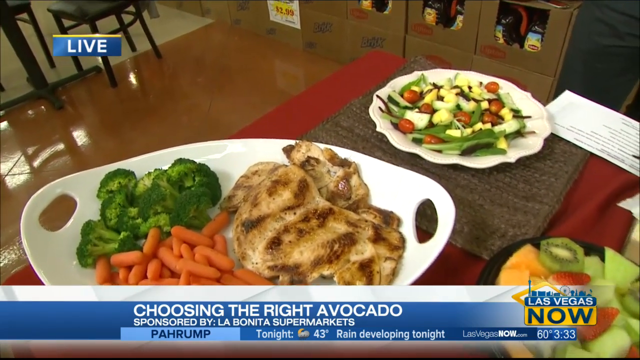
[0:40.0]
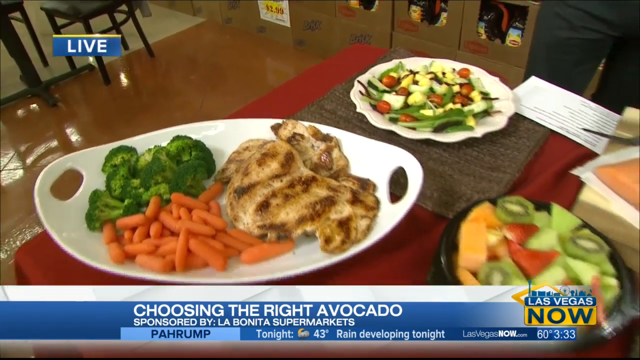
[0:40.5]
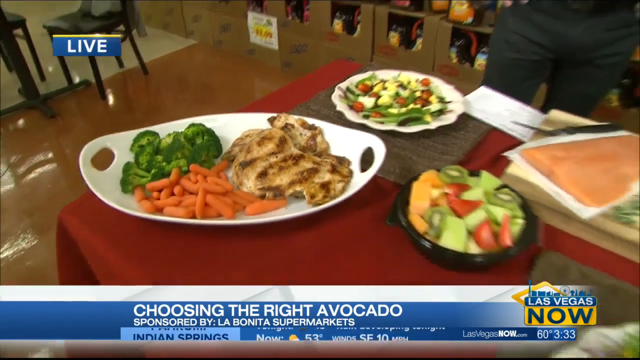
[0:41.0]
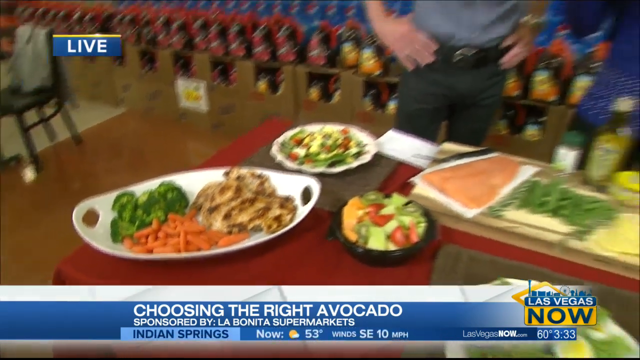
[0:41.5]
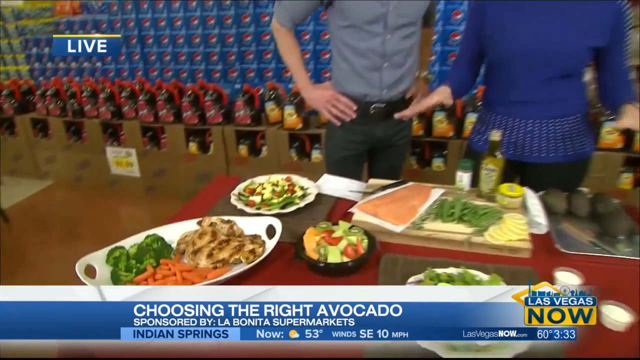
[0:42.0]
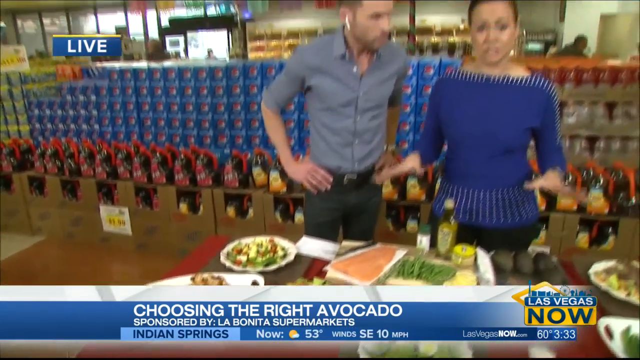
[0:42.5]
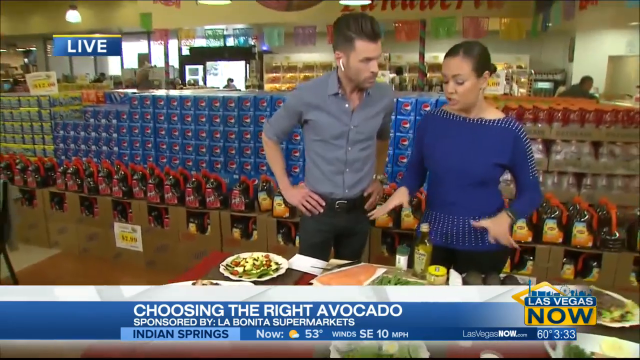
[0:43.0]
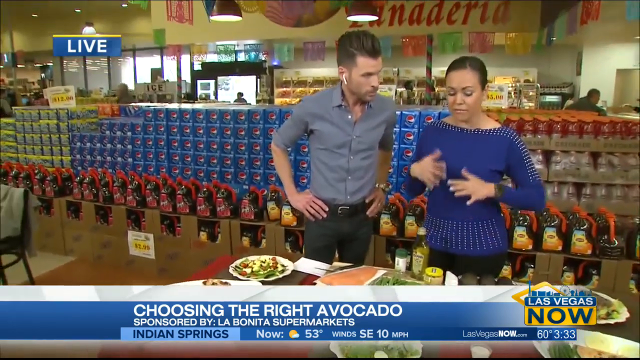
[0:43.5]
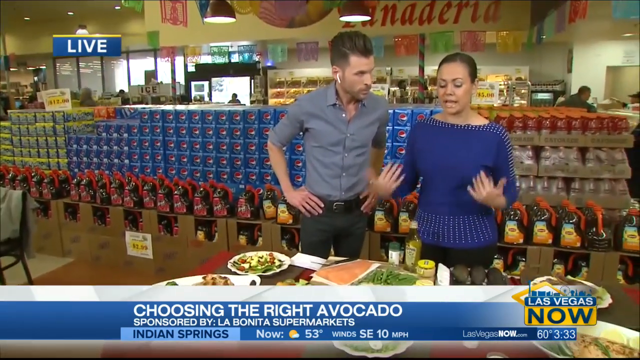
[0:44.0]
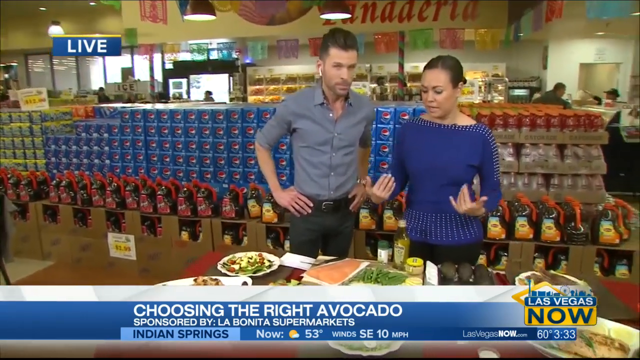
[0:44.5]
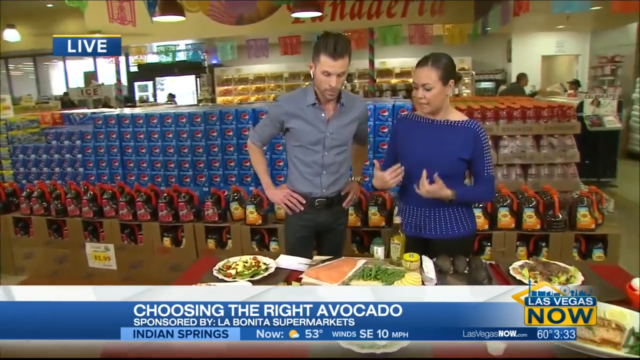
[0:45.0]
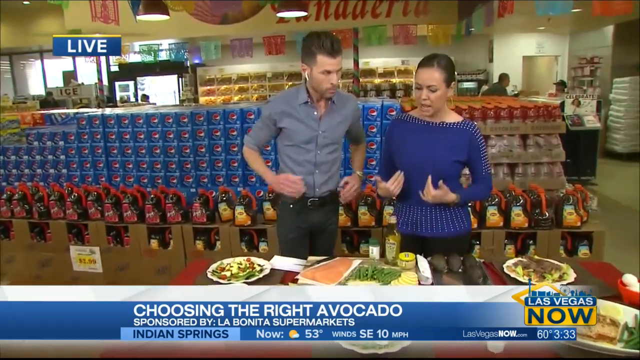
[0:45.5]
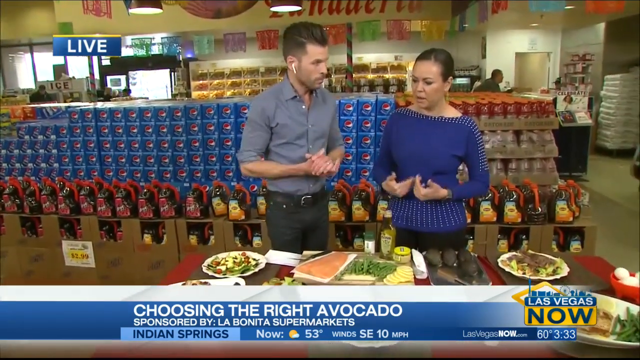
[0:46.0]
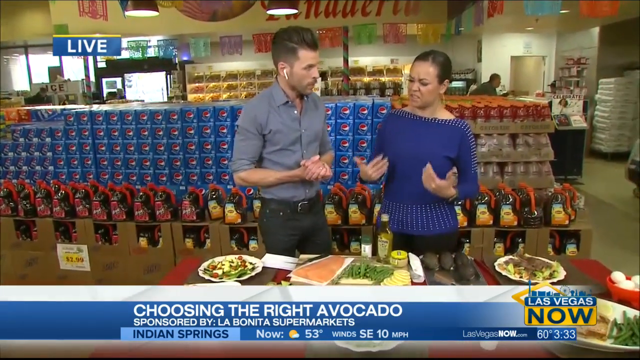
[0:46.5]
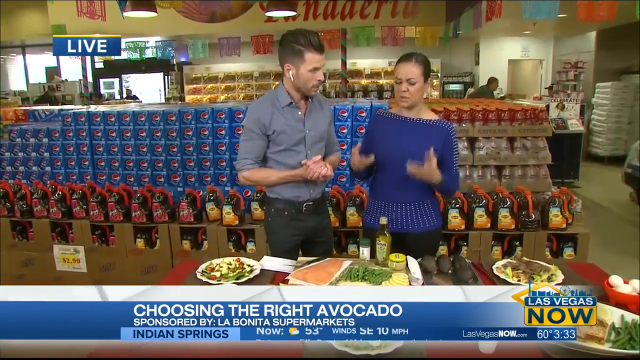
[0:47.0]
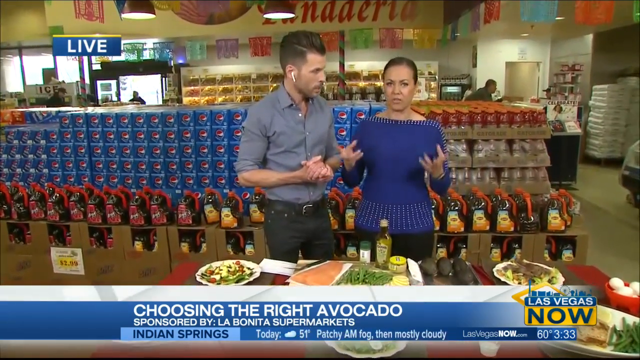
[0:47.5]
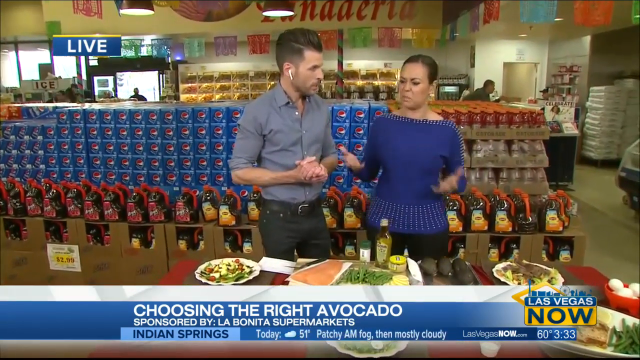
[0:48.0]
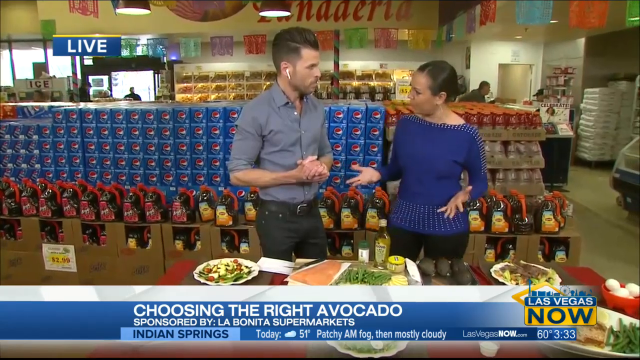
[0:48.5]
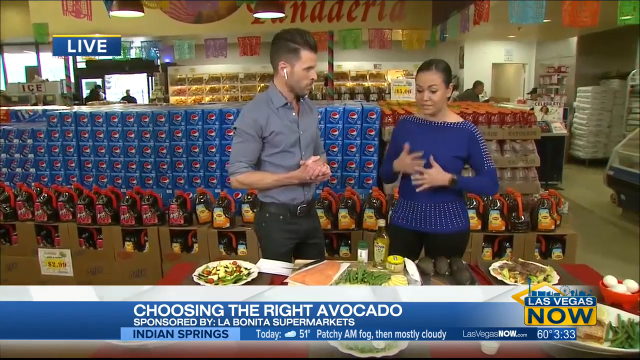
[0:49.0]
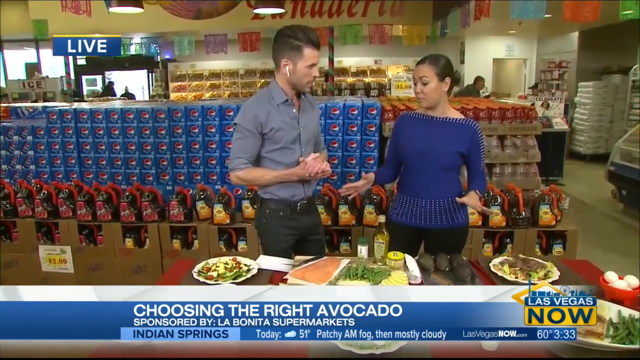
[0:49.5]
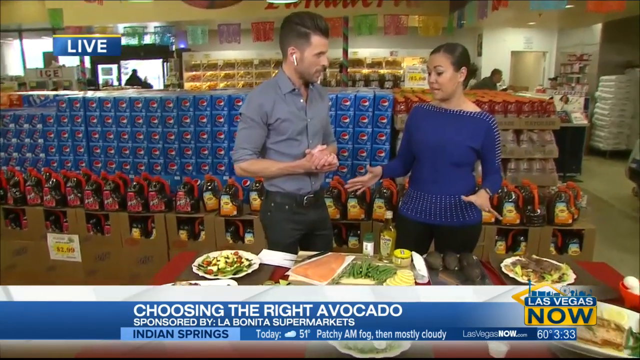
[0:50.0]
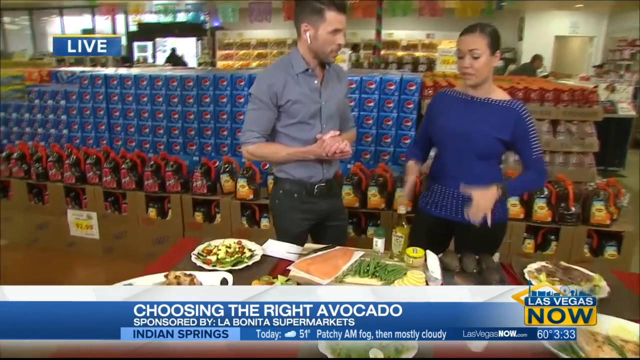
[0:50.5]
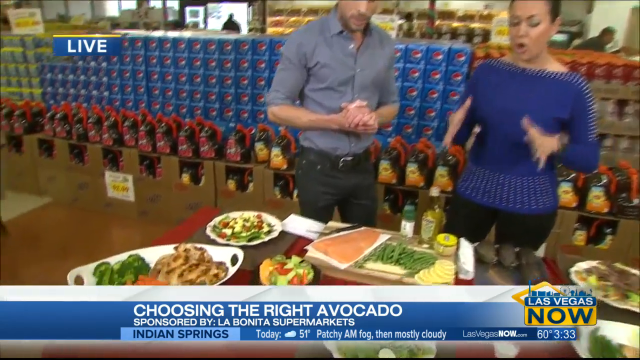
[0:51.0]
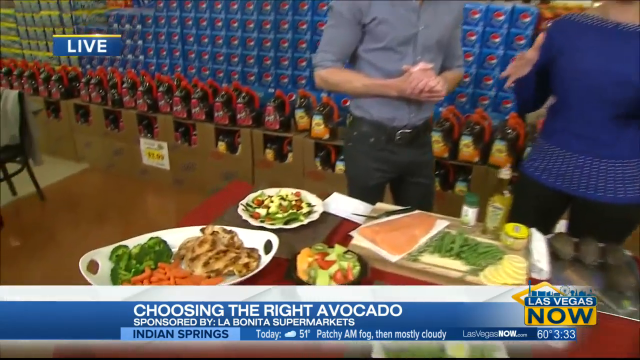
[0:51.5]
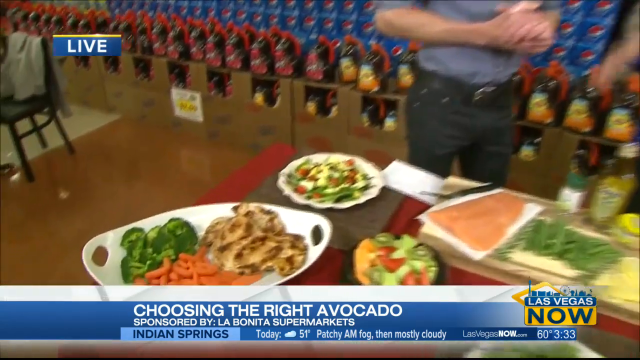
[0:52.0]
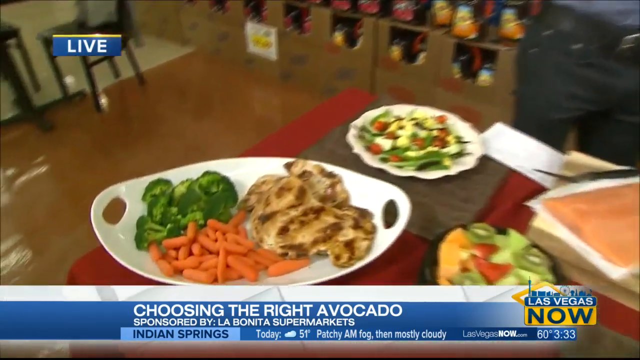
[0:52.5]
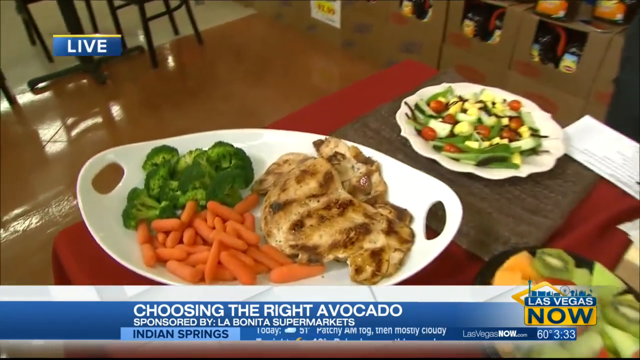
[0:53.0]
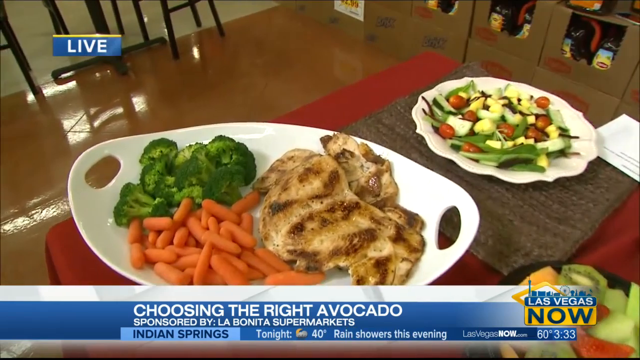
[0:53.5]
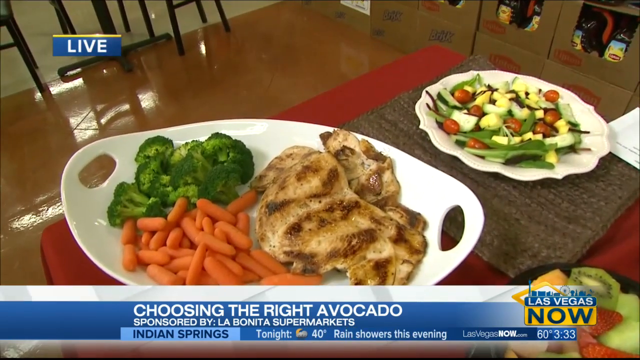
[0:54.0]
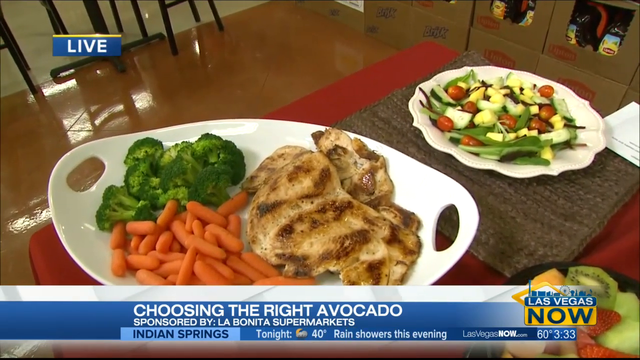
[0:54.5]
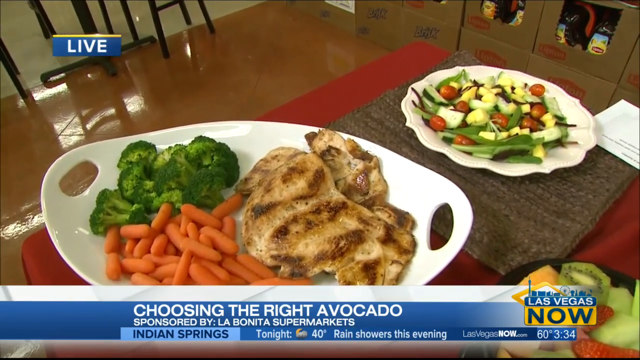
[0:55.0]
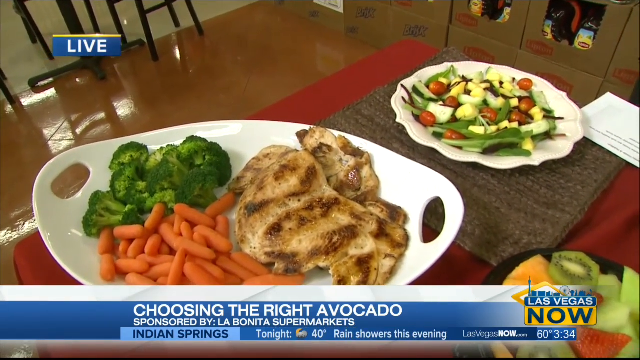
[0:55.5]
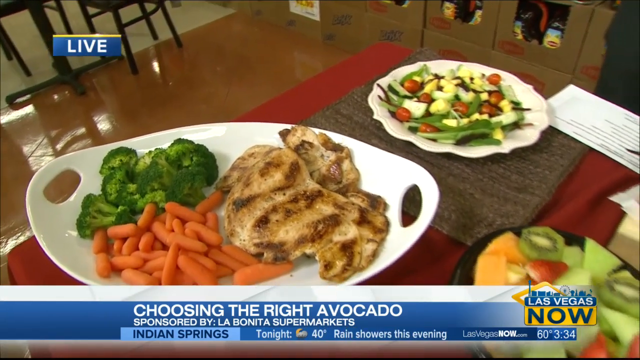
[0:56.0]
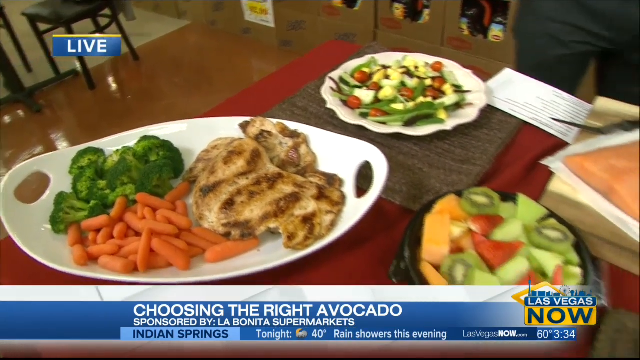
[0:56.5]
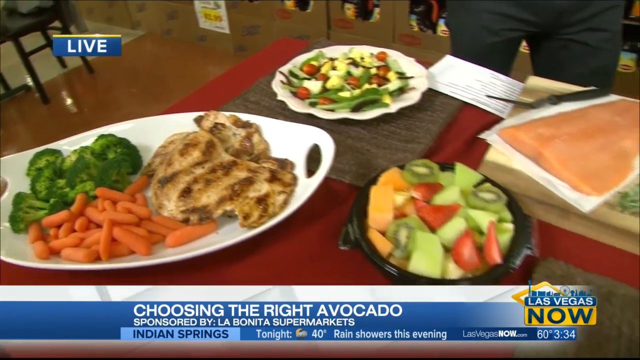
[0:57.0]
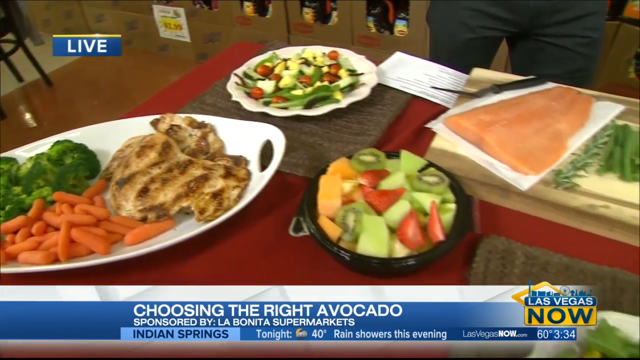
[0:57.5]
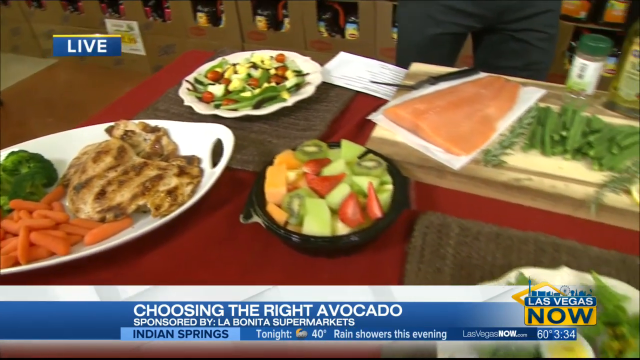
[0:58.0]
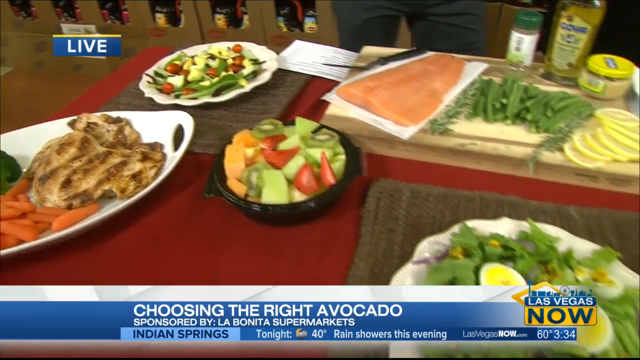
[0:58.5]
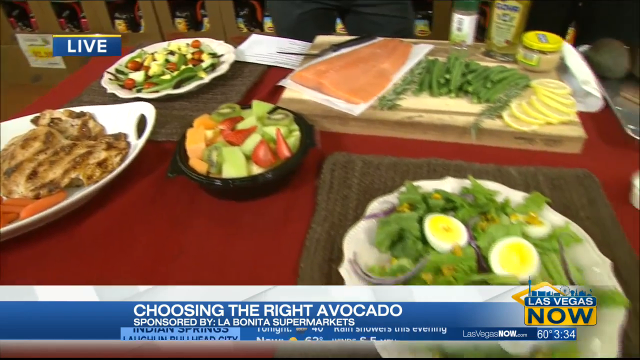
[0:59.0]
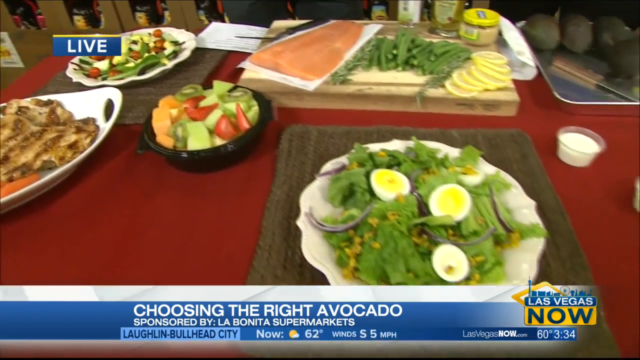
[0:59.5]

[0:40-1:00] The segment is labeled "choosing the right avocado," sponsored by LA Bonita Supermarkets. There is a plate of salad, a plate with what looks like grilled chicken along with broccoli and carrots, and a little fruit plate. A man, apparently the reporter, in a gray shirt and black pants talks with a lady in a blue top and black pants, who talks with her hands a lot. Text reads "Las Vegas now," apparently the people hosting the segment. The camera zooms in on the chicken, broccoli and carrots, then shows the fruit: strawberries, cantaloupe, kiwis and melon. There is also a little salad with eggs.